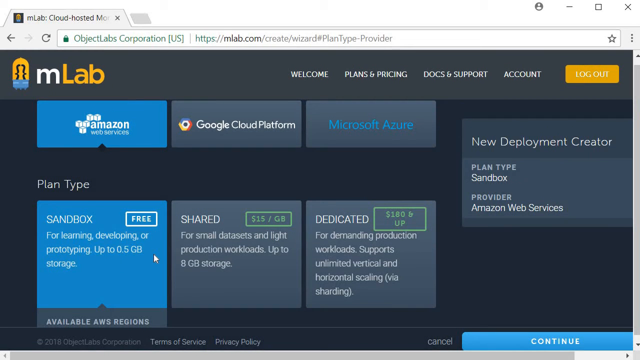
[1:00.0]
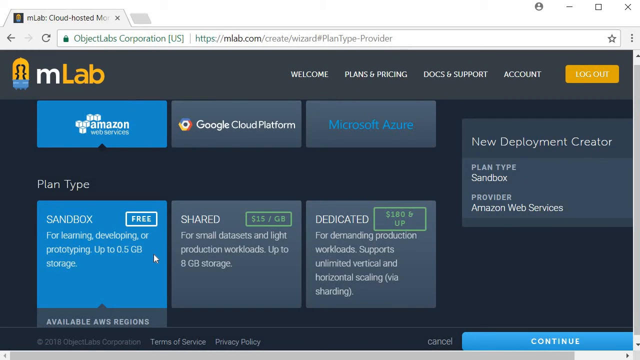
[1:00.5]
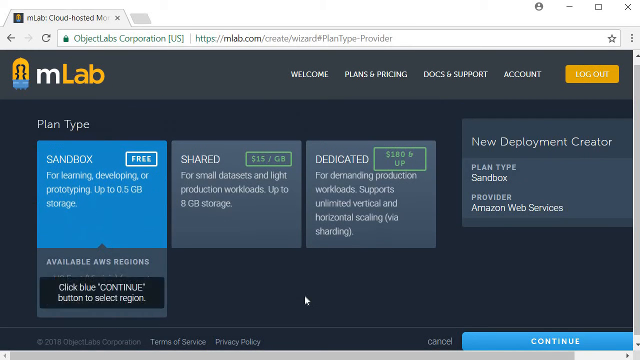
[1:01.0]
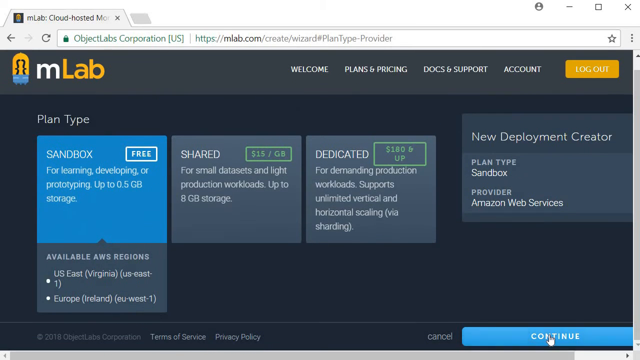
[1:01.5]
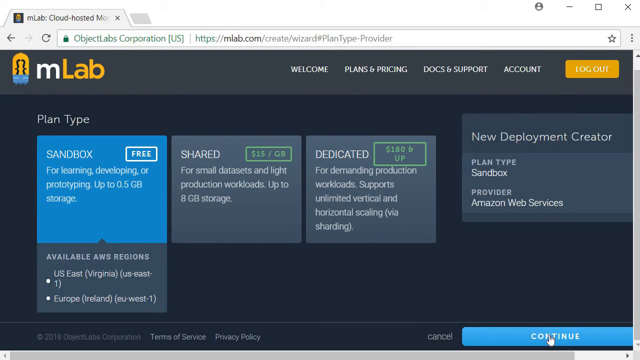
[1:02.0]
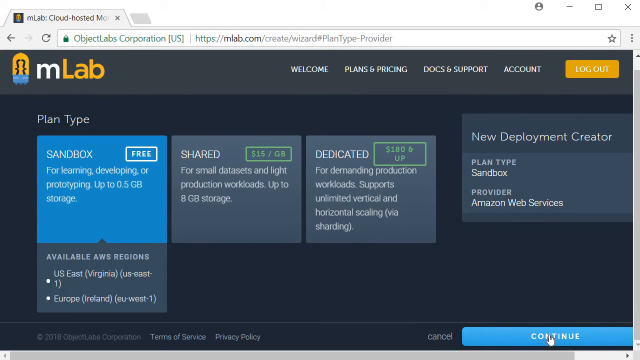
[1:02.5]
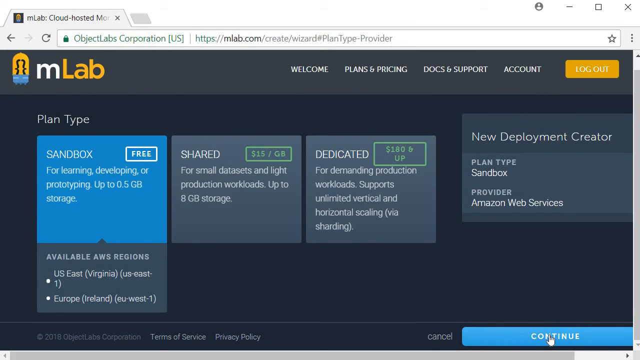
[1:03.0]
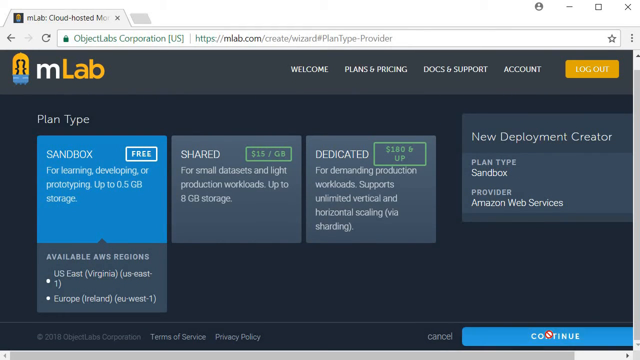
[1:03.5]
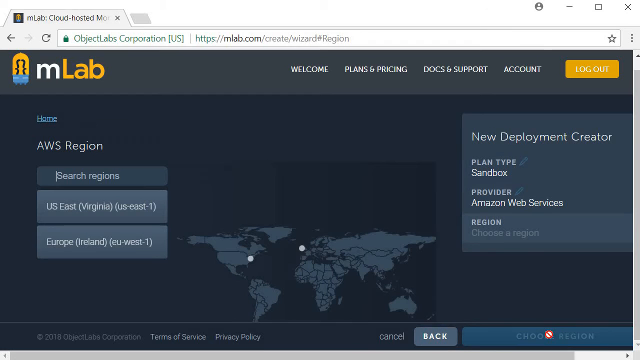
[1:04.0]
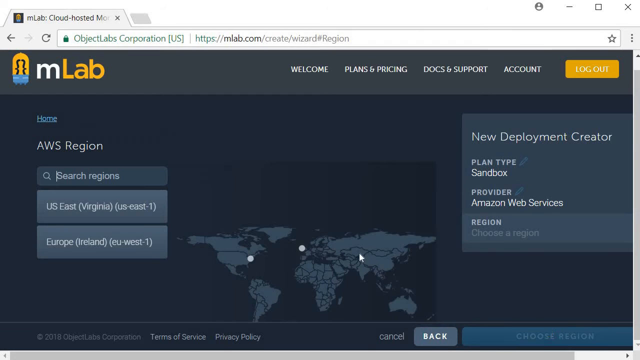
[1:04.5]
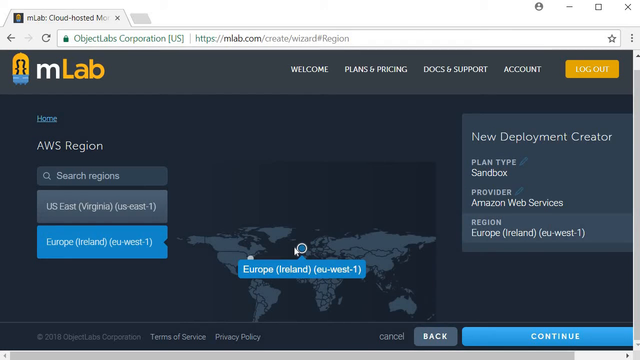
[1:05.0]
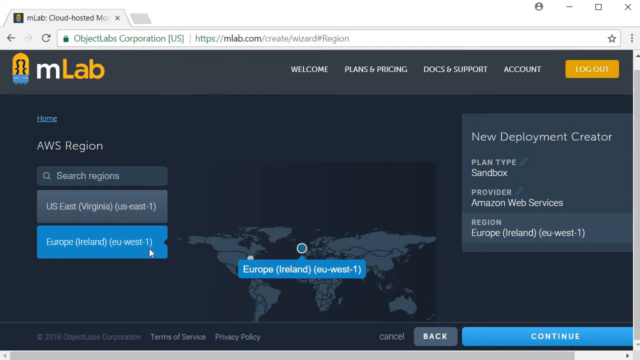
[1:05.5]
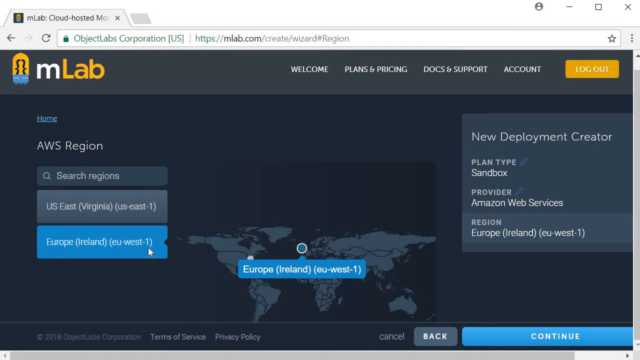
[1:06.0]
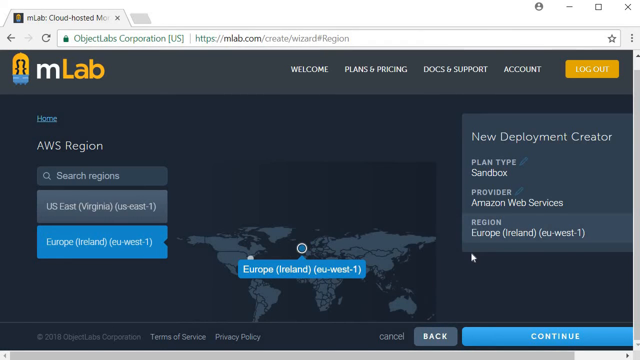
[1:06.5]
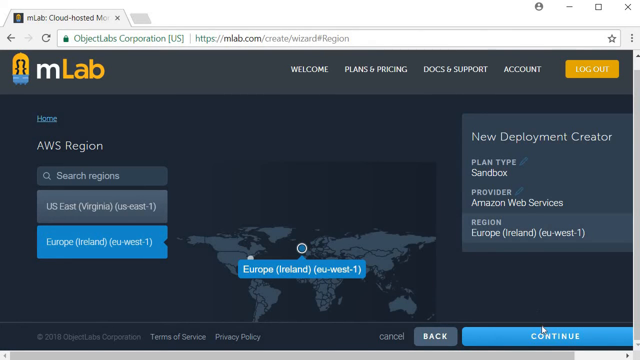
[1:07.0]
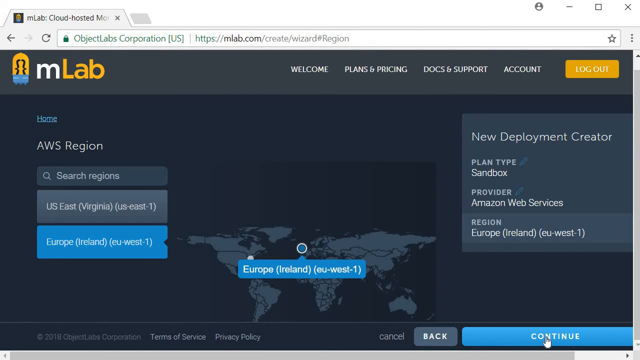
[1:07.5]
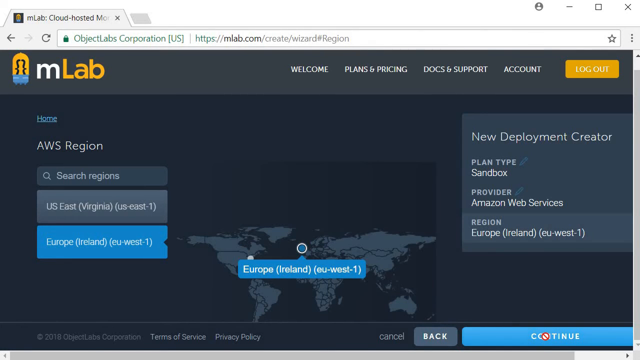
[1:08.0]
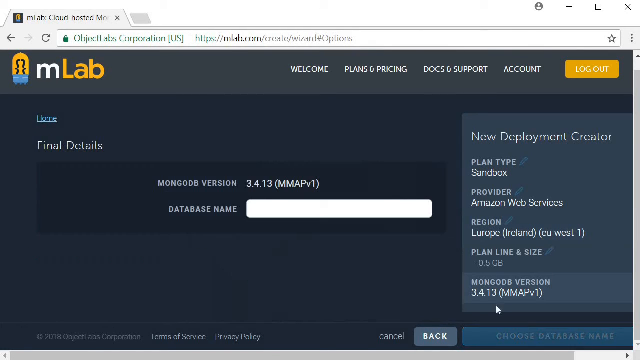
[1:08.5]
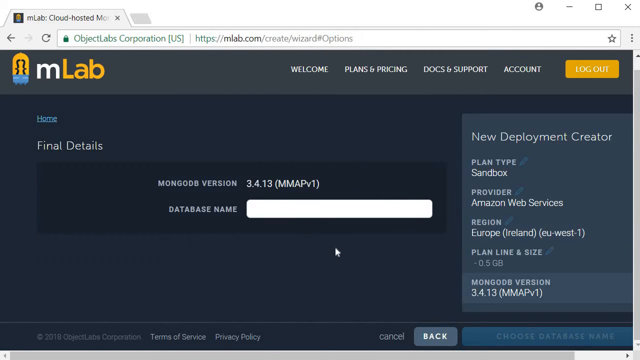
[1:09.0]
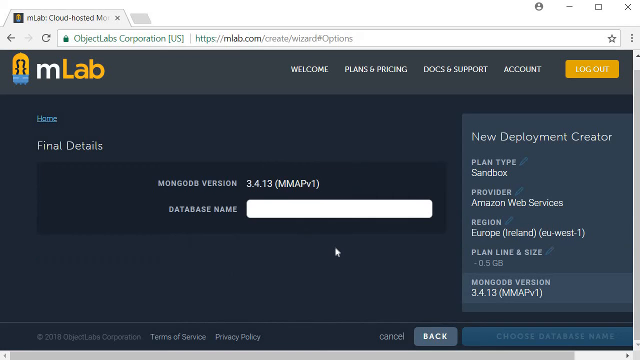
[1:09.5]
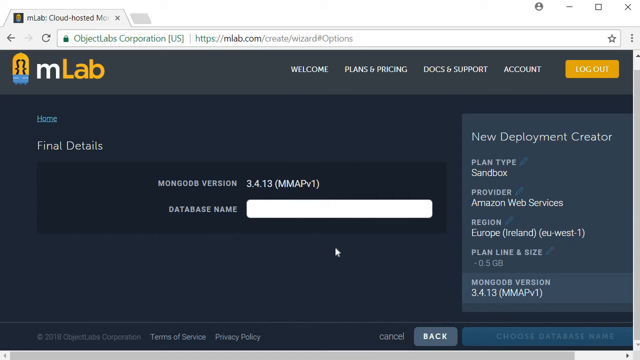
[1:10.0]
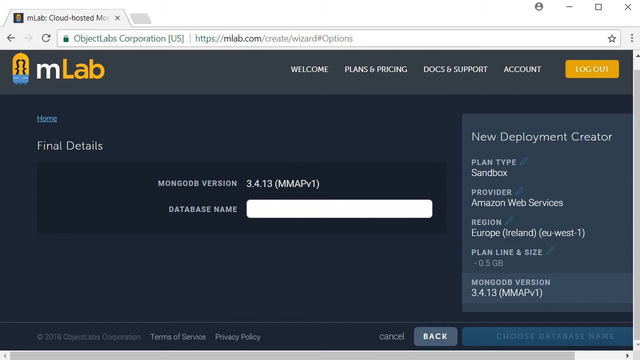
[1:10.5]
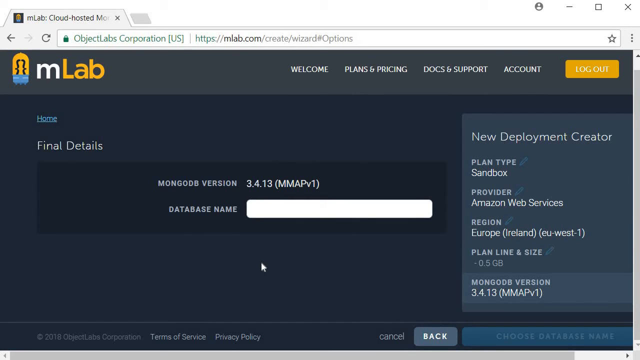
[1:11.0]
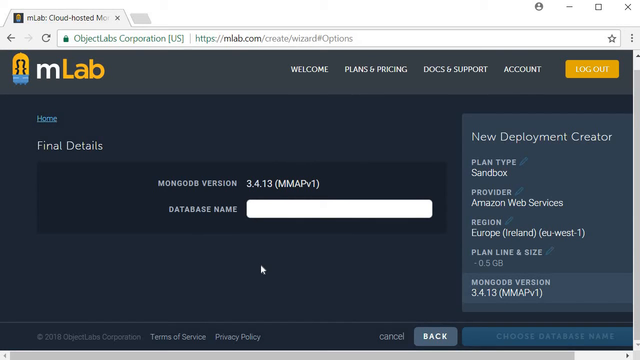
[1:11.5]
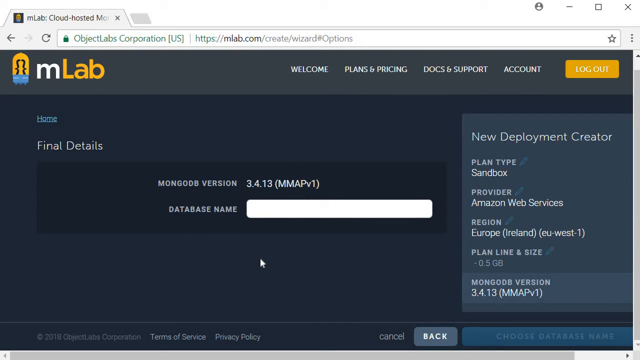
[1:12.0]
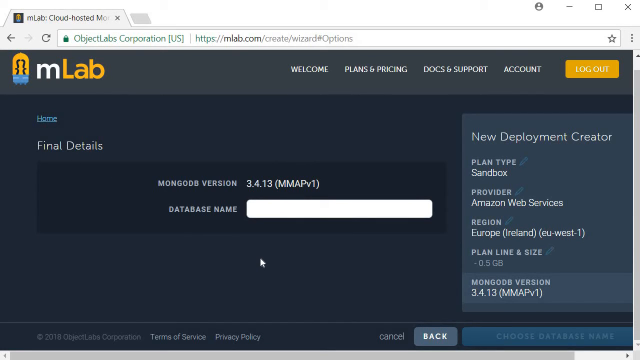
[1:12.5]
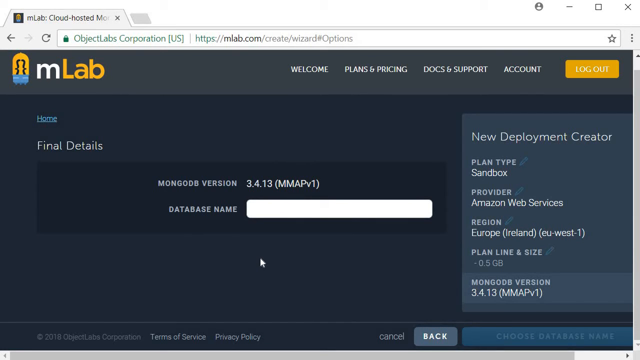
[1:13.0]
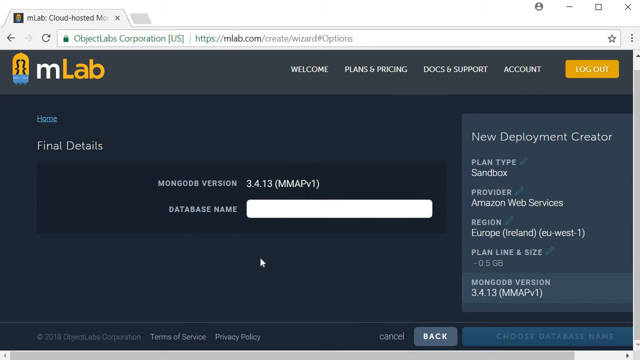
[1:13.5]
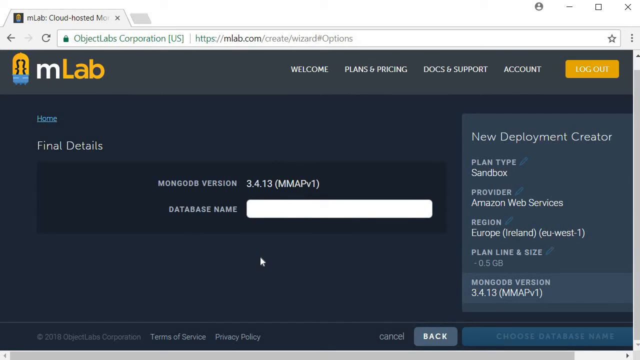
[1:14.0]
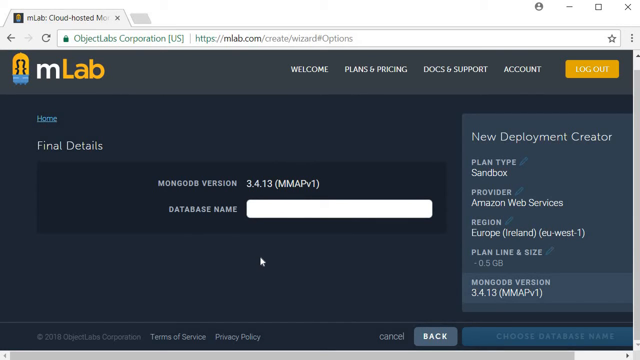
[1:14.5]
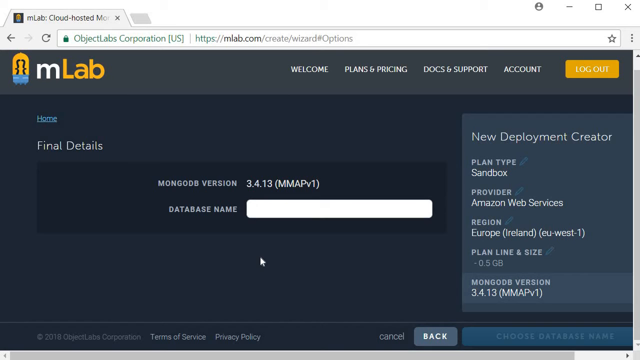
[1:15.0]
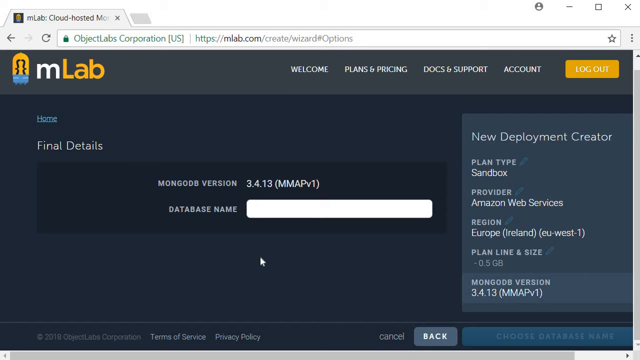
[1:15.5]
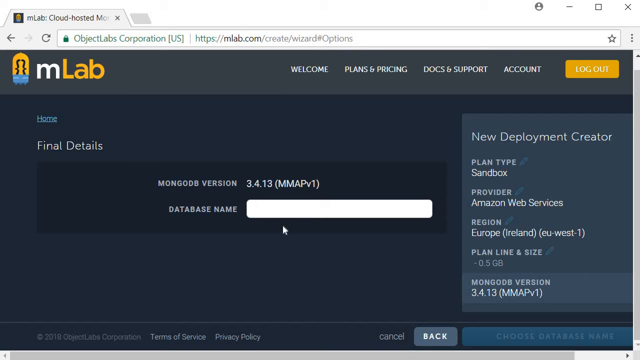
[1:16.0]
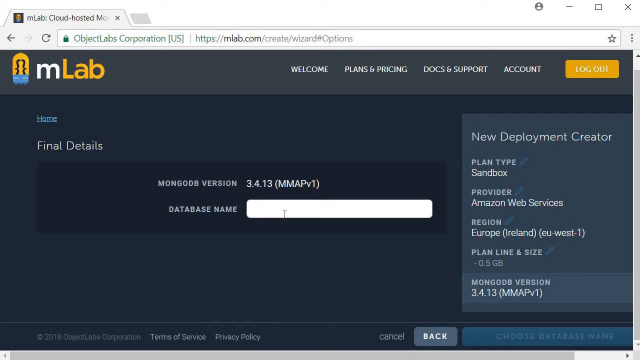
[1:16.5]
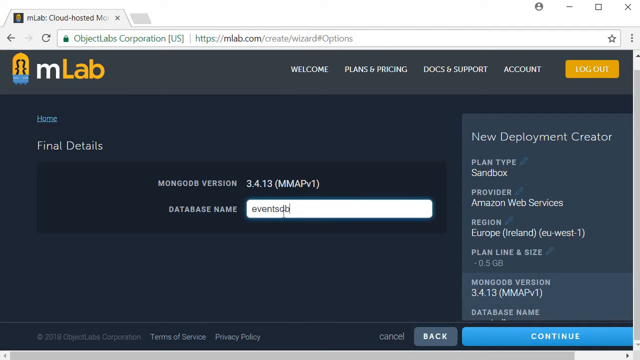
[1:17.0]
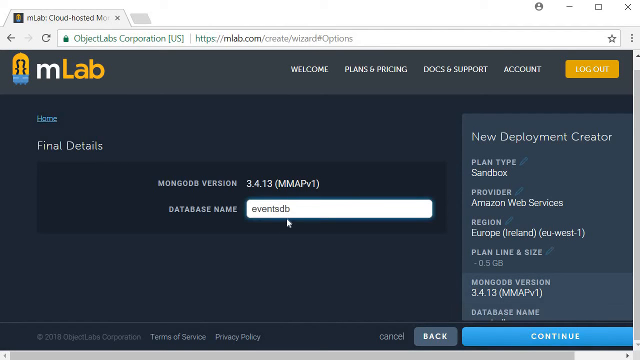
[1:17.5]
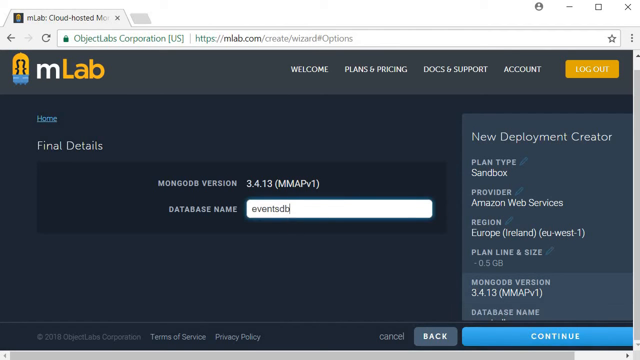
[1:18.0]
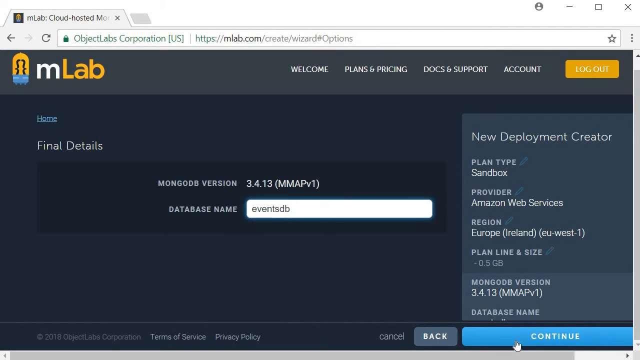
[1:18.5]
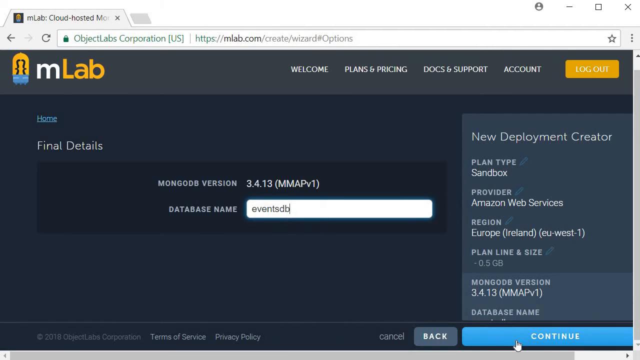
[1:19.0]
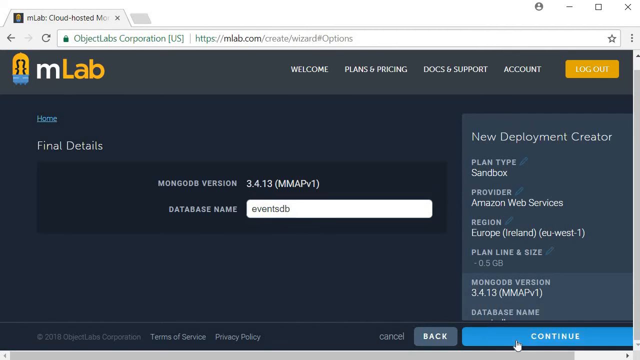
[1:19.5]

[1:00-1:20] A signup page for the website mlab.com is on screen. At the top is a dark gray bar with the MLab logo on the far left and a yellow logout button on the far right. The page is scrolled down a little, with the text "plan type" in the middle of the screen. Underneath are three boxes. The first reads "sandbox" with "free" next to it and is blue, since the user has just clicked it. The next is gray and reads "shared" with a price of $15 per gigabyte, and the one after reads "dedicated" with a price of $180 and up. To the right of these boxes is another dark gray box with white text reading "new deployment center", and beneath that "plan type sandbox provider amazon web services". The user scrolls down to reveal a gray box under the blue sandbox box reading "Available AWS Regions". The user clicks the button reading "Europe", and it turns blue. The user then clicks a blue "continue" button in the lower right corner. The screen shifts to one with text reading "final details". A darker gray box in the middle of the screen has two fields. The top one is MongoDB version, with "3.4.13, (MMAPv1)" next to it. Below that is a field labeled database name with a blank white box. The user clicks the white box and the words "eventsdb" appear in it. The user then moves the cursor down to the lower right corner to click the continue button.